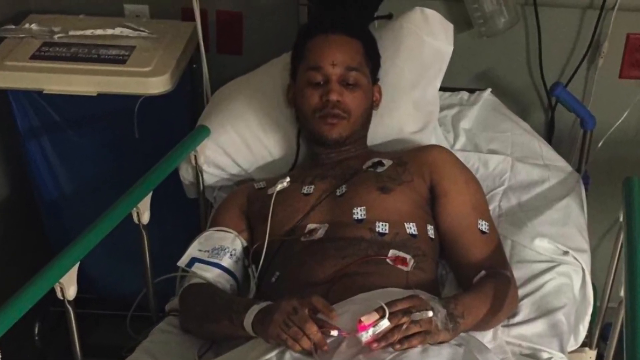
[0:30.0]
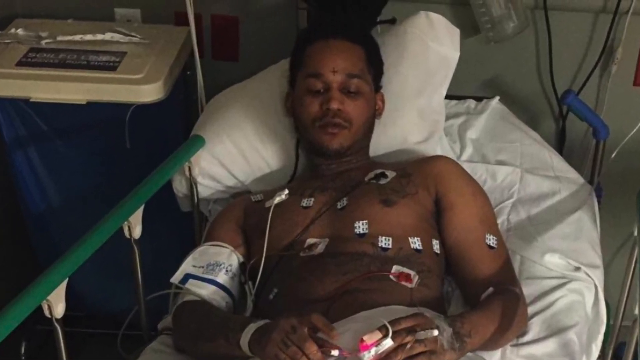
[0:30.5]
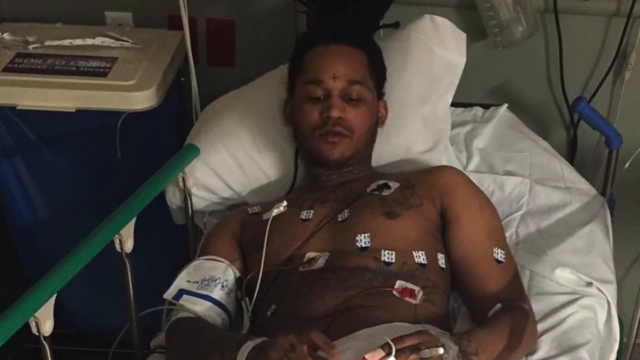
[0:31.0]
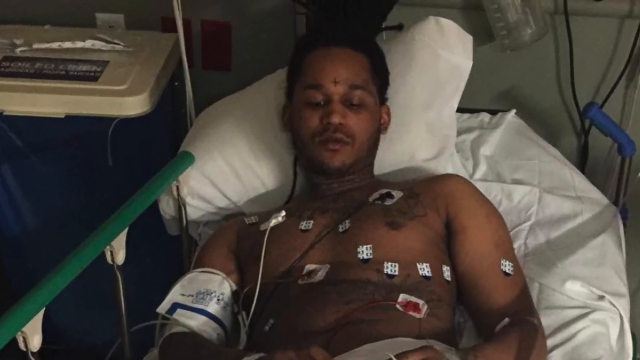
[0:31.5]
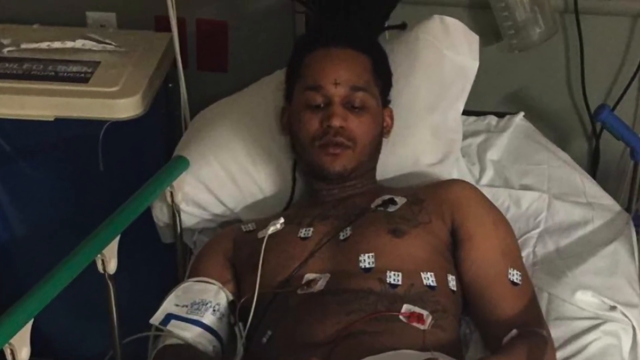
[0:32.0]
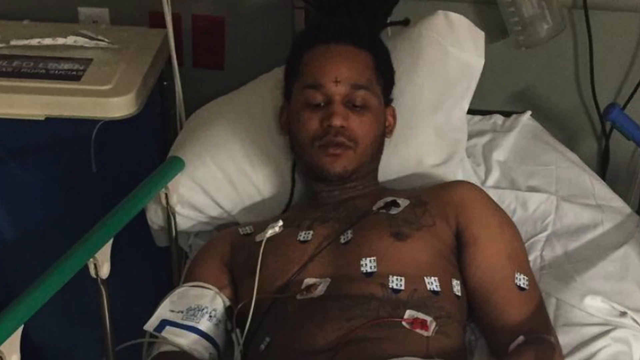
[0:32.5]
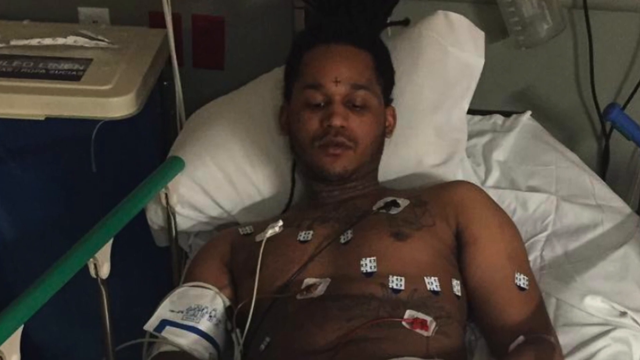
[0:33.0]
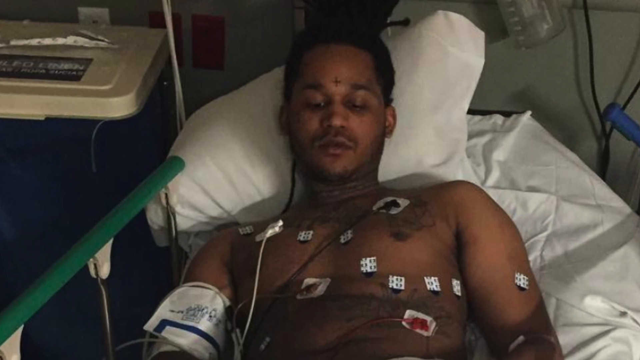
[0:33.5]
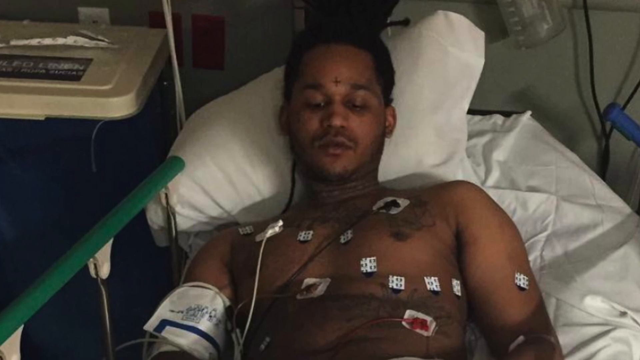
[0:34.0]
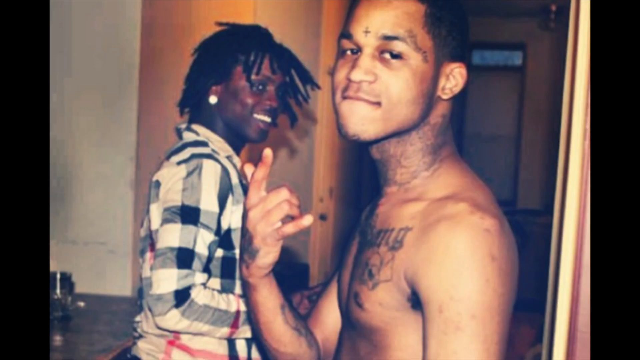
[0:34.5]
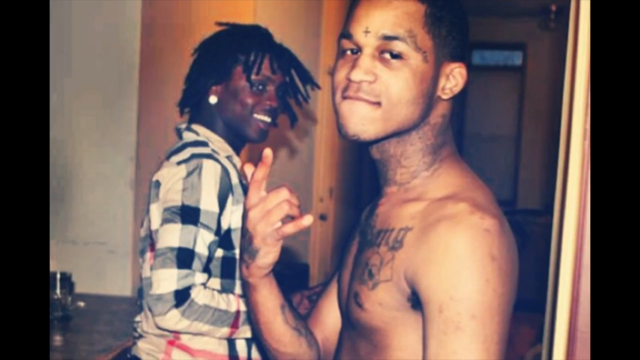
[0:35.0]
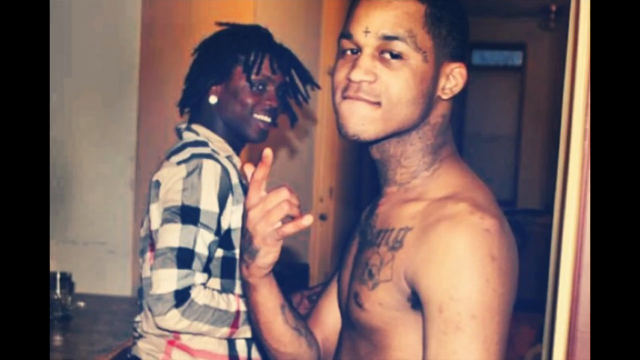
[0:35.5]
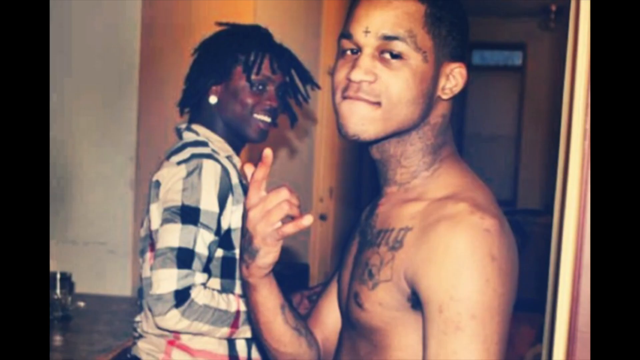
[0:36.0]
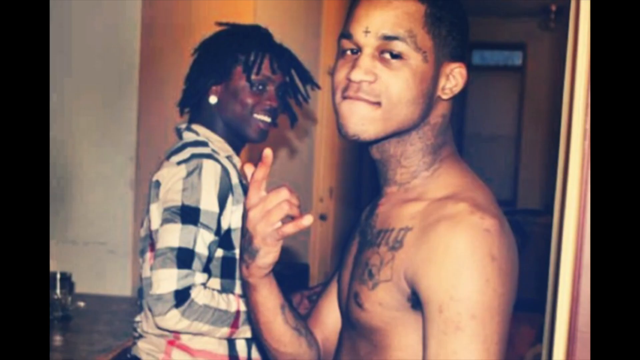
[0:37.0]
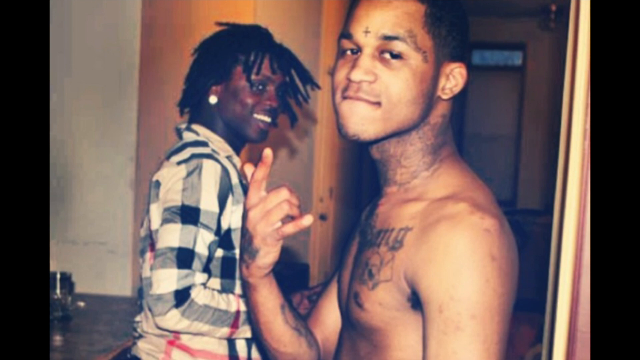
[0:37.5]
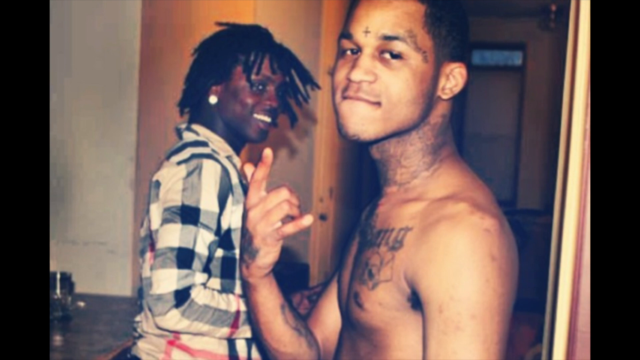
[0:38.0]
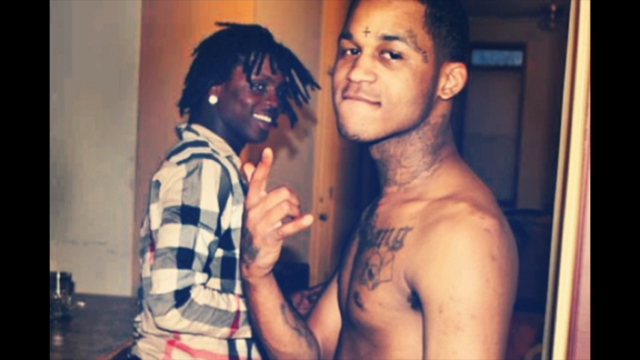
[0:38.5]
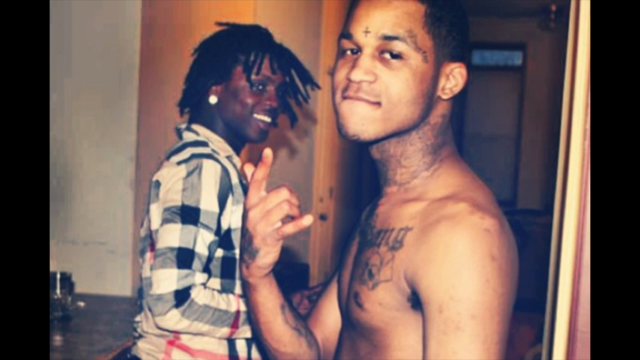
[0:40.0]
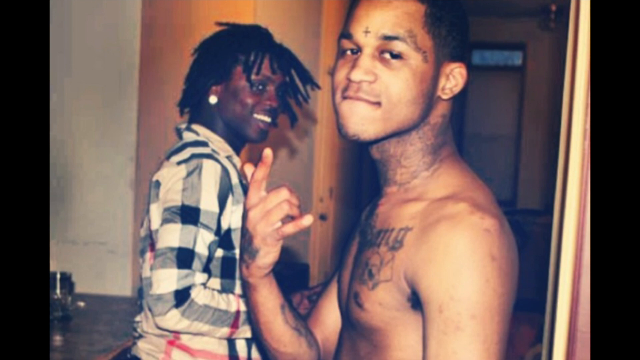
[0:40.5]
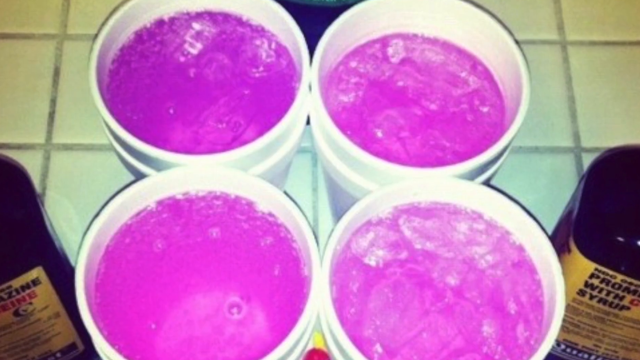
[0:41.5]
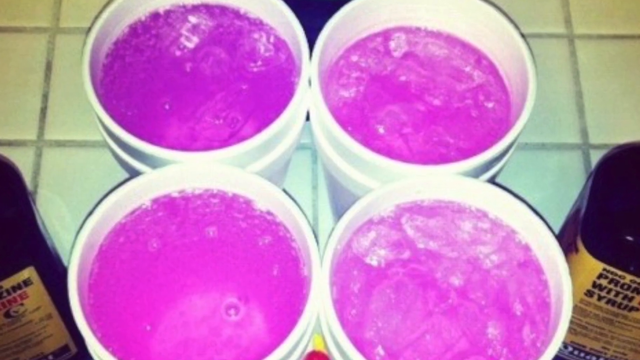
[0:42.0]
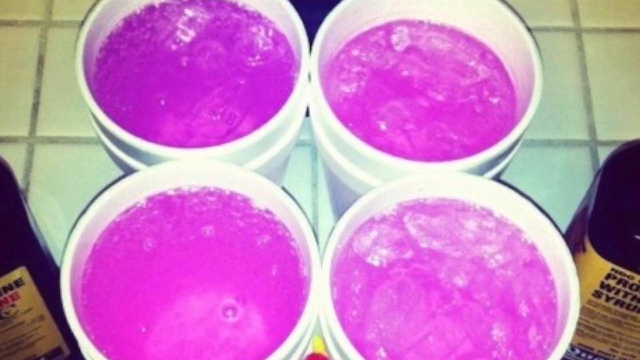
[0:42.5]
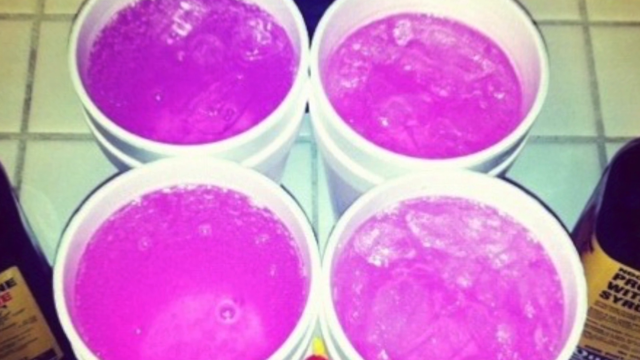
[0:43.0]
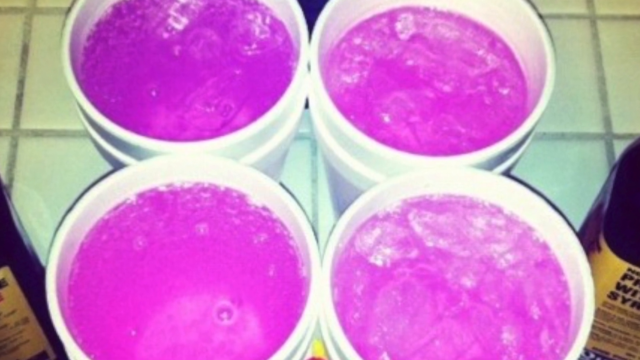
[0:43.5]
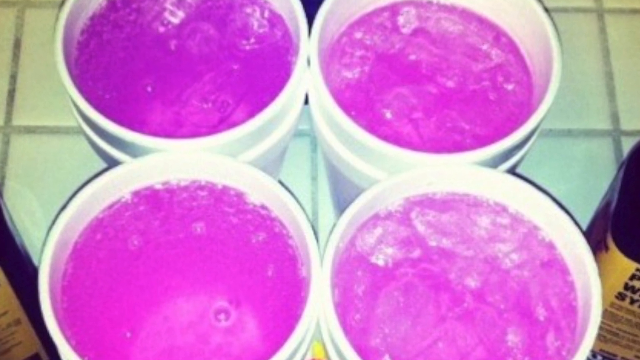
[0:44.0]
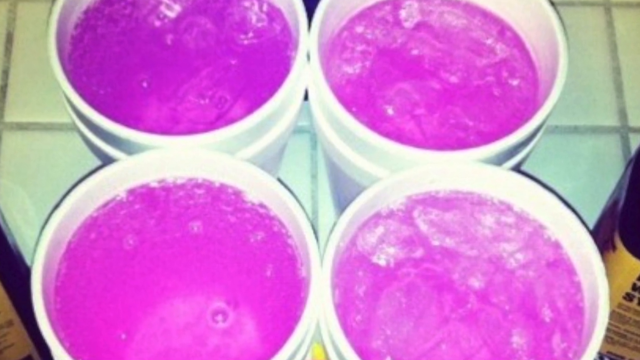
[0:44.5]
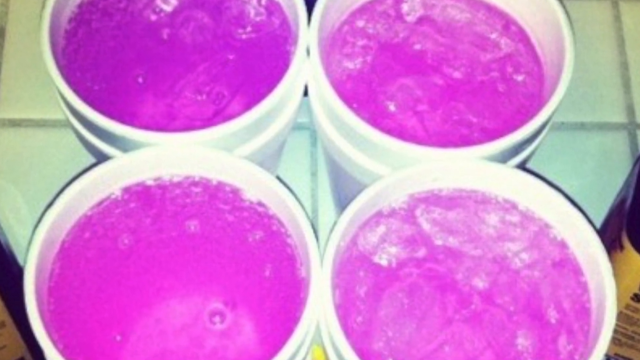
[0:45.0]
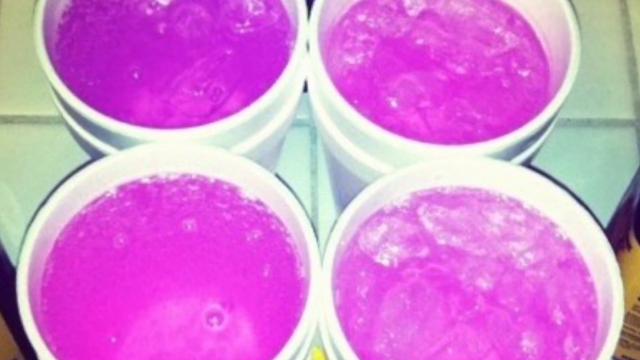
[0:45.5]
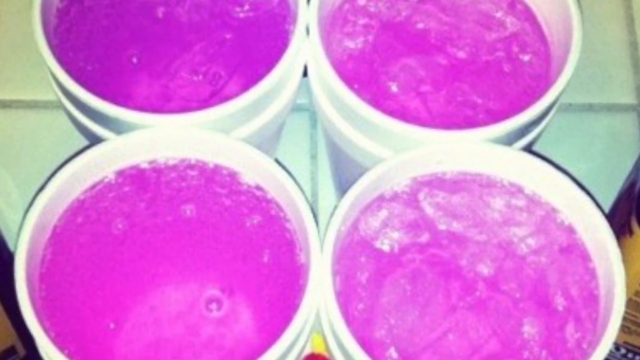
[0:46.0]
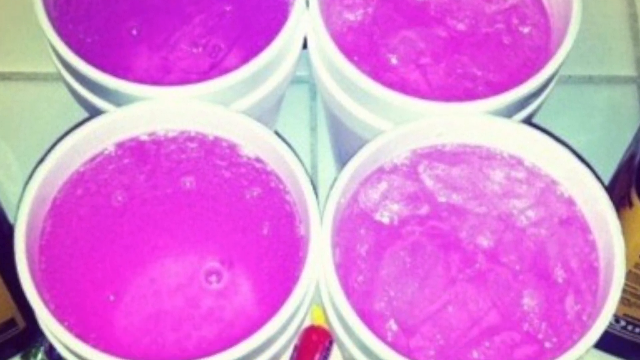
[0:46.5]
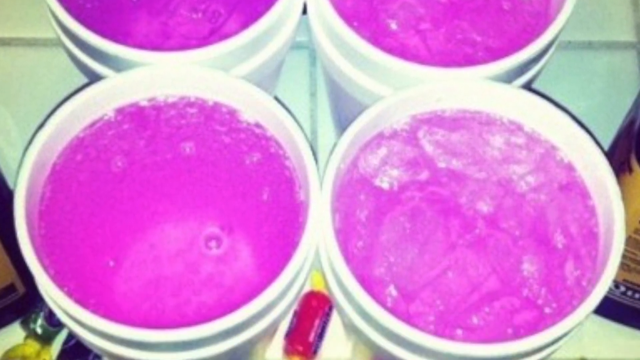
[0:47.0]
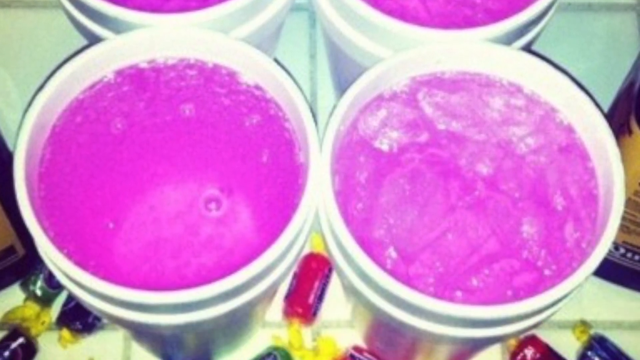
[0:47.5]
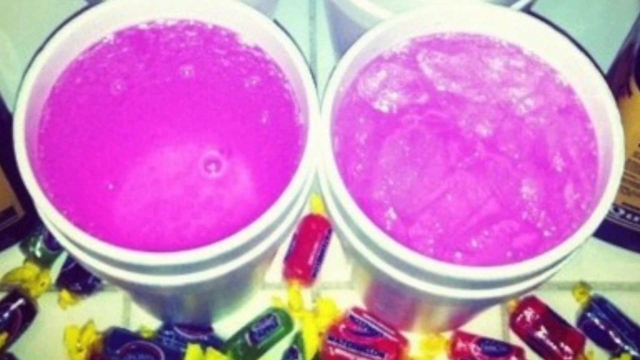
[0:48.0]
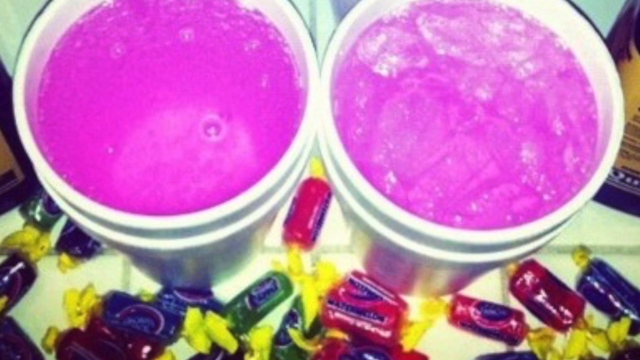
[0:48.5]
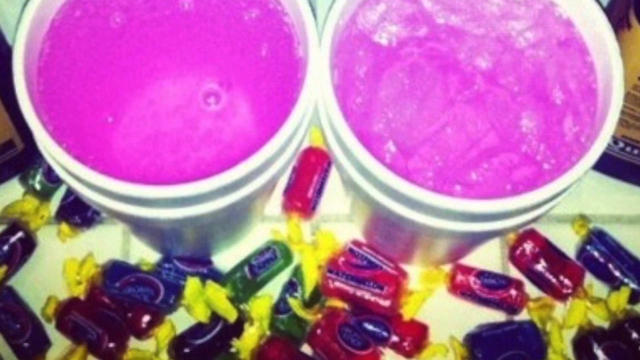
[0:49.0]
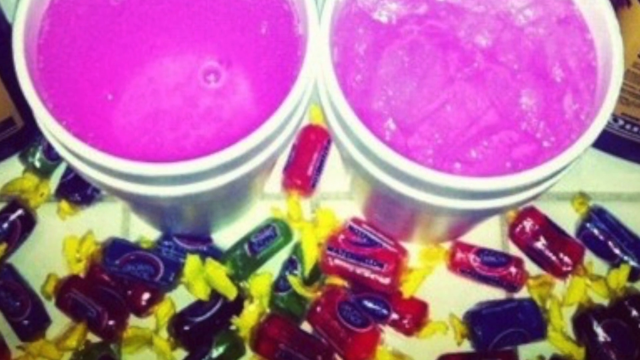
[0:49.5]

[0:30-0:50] The shot zooms in on the man in the hospital bed, who has sort of white stickers on his body and is shirtless, with a white and blue cuff on his right arm. He has a little cross on his forehead and black hair, and he is looking down. To his left is a sort of blue and white wastebasket with a kind of white lid on top. The scene transitions to another shot of the man, seen kind of in profile and looking toward the camera, with his right arm up in a hand pose: index finger, thumb and pinky lifted, middle and ring fingers curled in. He is shirtless here as well and has a tattoo around his neck and one on his chest. To the left is another man with black dreads, kind of looking back at the other guy, wearing a sort of striped white and blue shirt, and a door is sort of open behind them. Next comes a shot of a few drinks in white cups that look like styrofoam, each holding a purple kind of liquid with a bunch of ice. The shot pans down to a bunch of sort of candies on a sort of white surface; the candies have yellow wrappers, but their centers show different colors like red, green and blue.